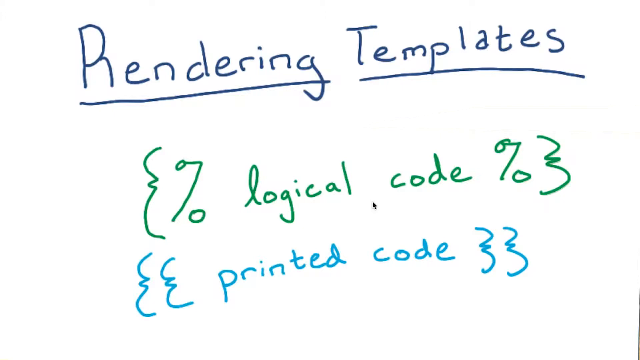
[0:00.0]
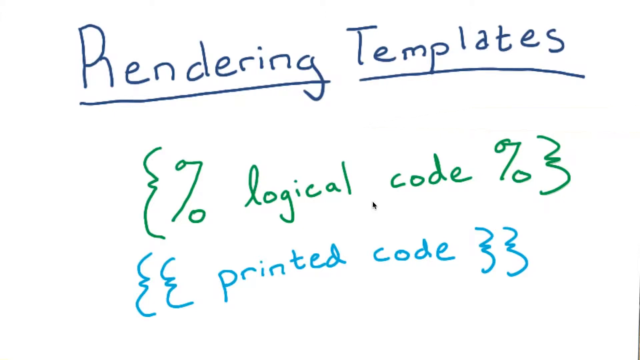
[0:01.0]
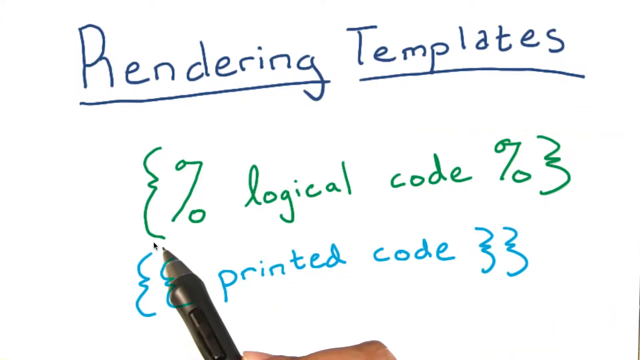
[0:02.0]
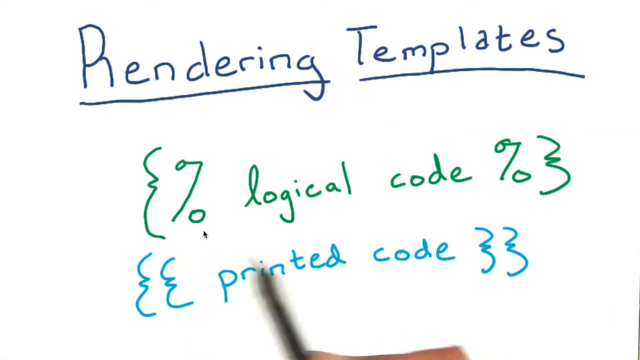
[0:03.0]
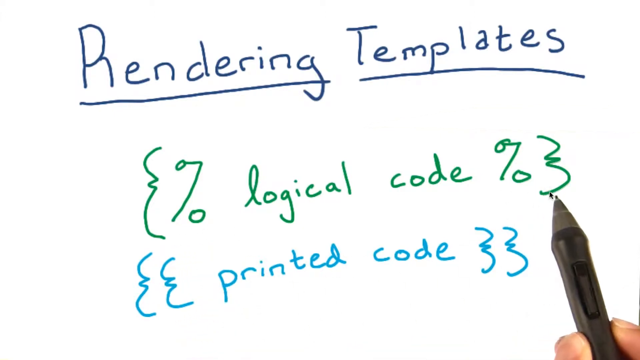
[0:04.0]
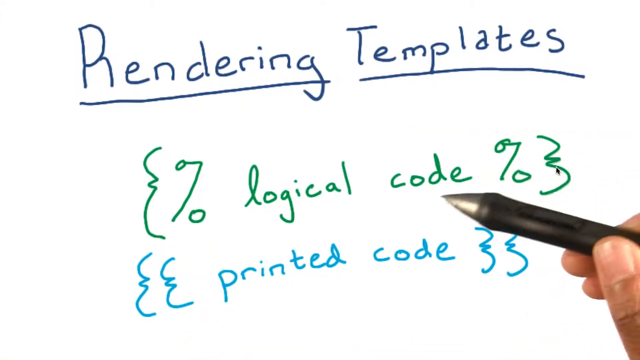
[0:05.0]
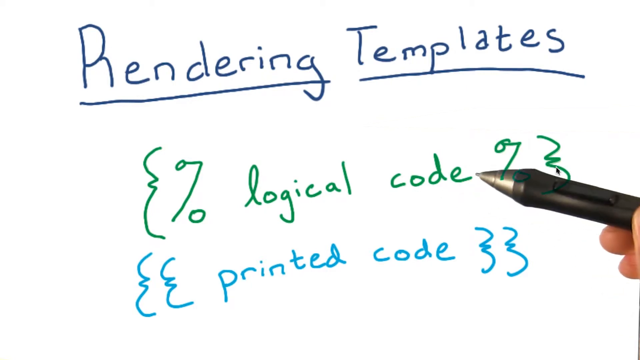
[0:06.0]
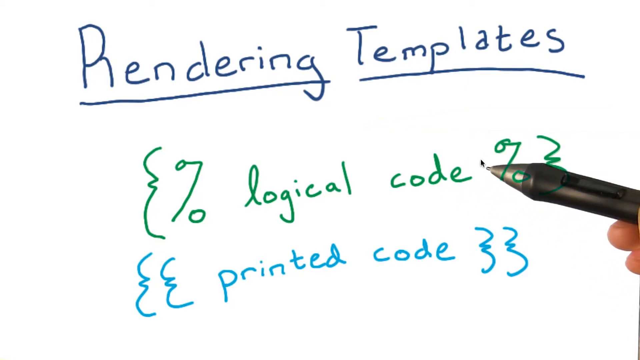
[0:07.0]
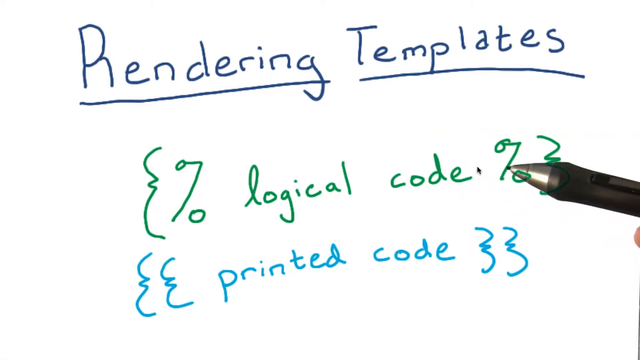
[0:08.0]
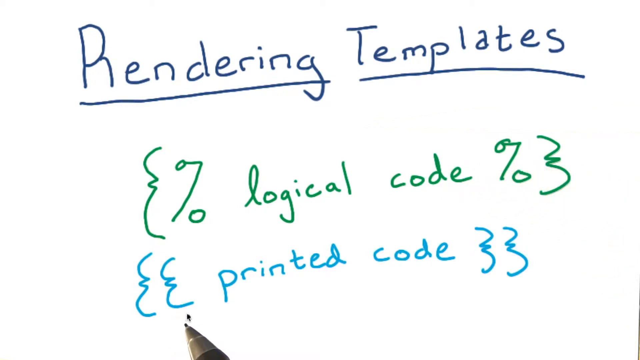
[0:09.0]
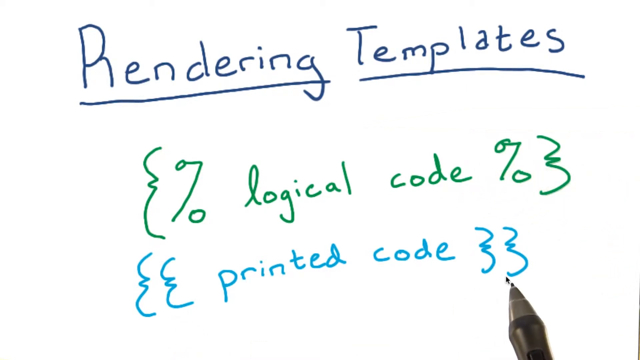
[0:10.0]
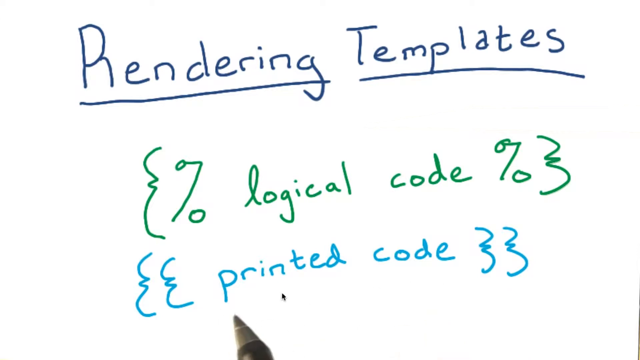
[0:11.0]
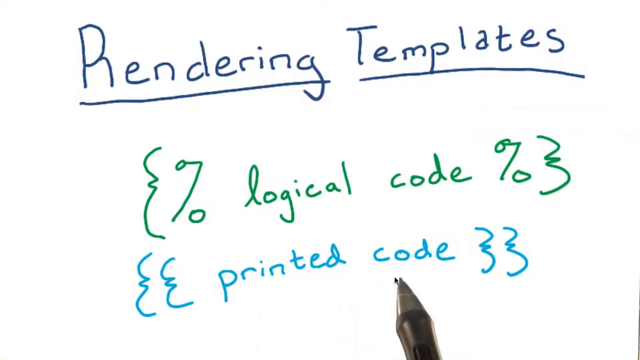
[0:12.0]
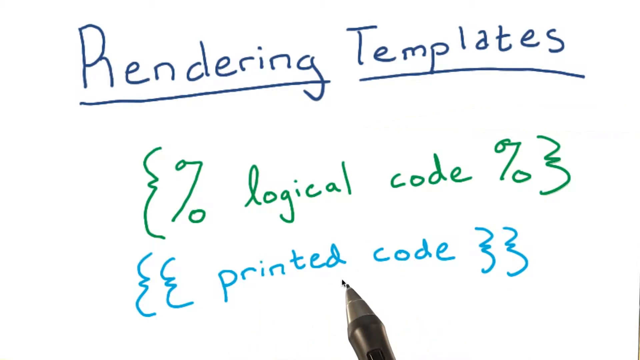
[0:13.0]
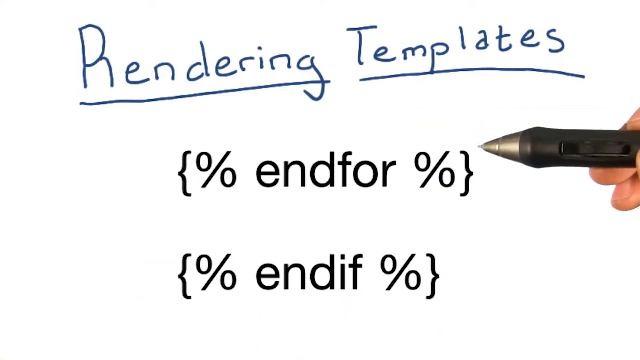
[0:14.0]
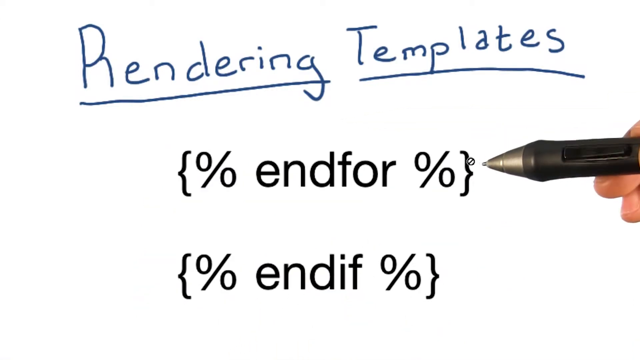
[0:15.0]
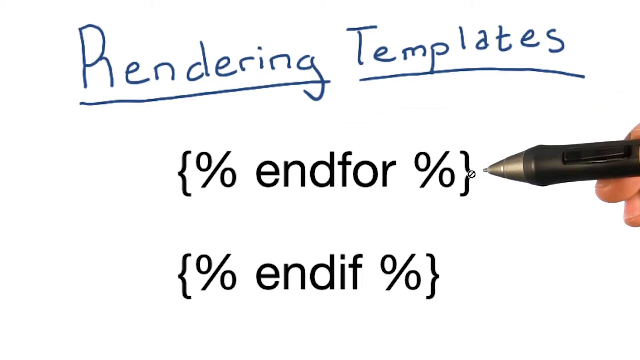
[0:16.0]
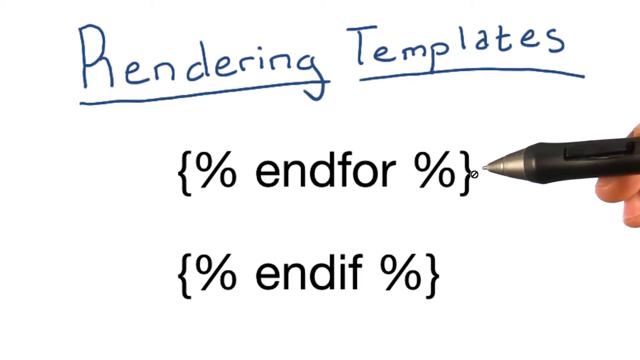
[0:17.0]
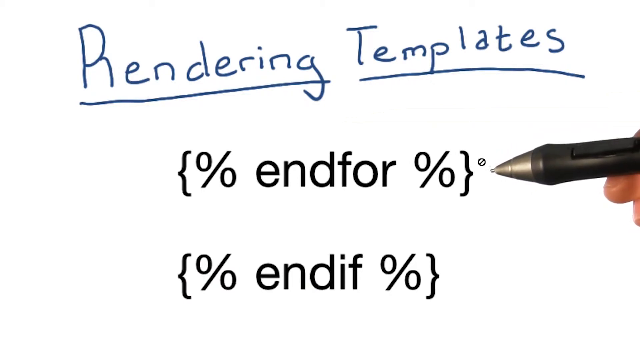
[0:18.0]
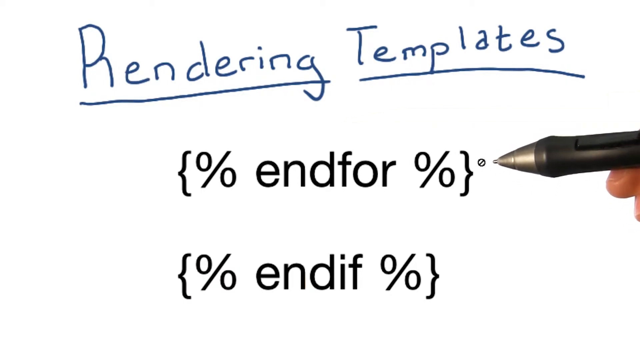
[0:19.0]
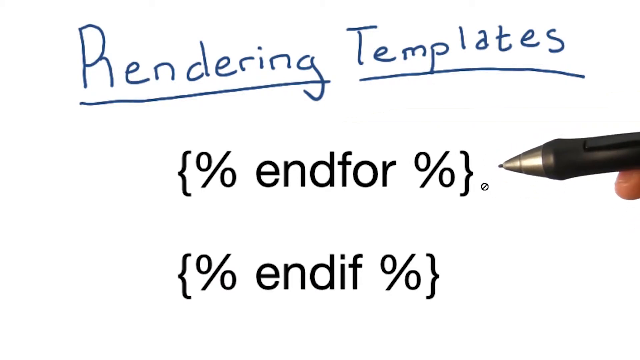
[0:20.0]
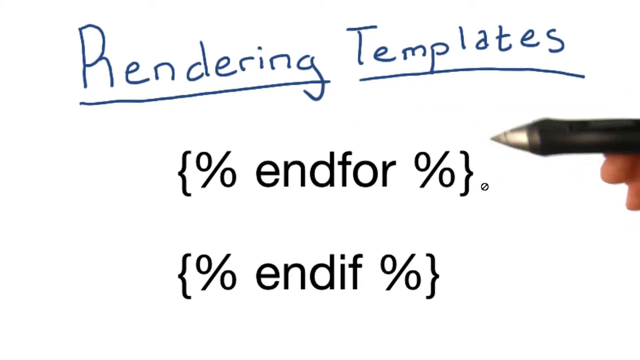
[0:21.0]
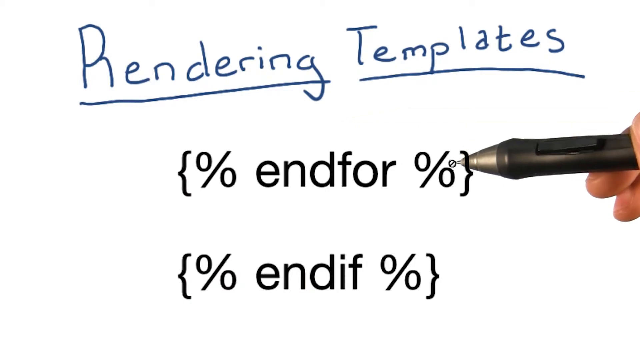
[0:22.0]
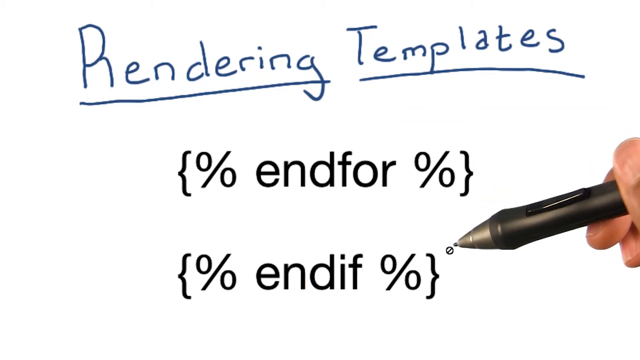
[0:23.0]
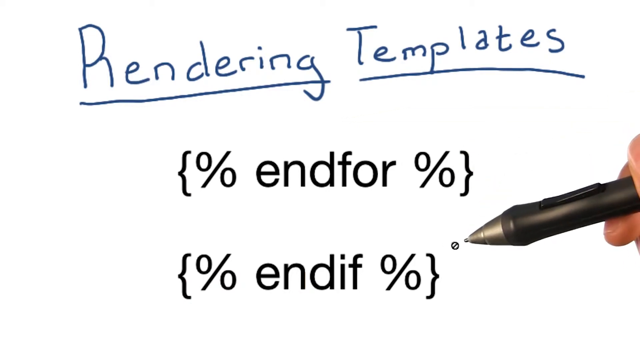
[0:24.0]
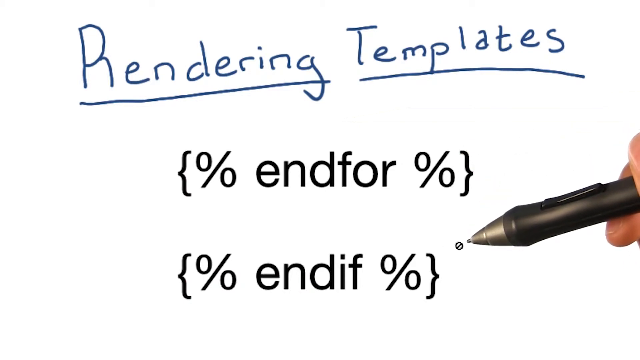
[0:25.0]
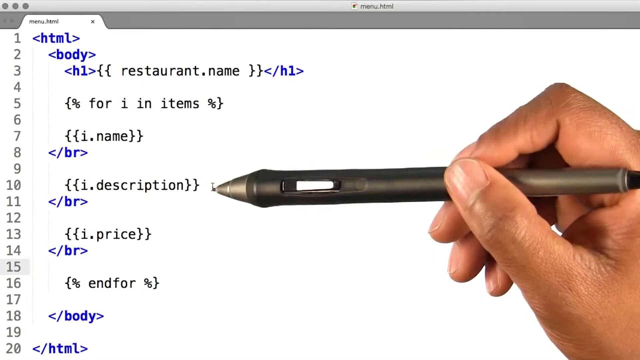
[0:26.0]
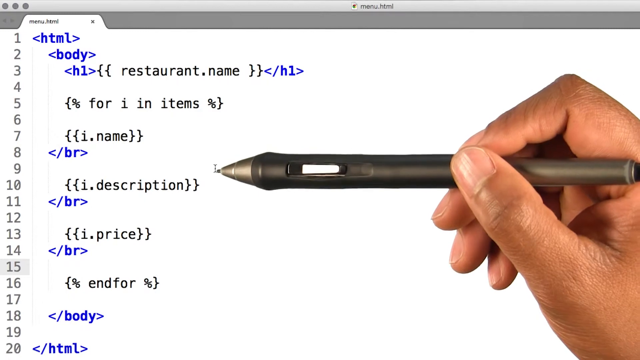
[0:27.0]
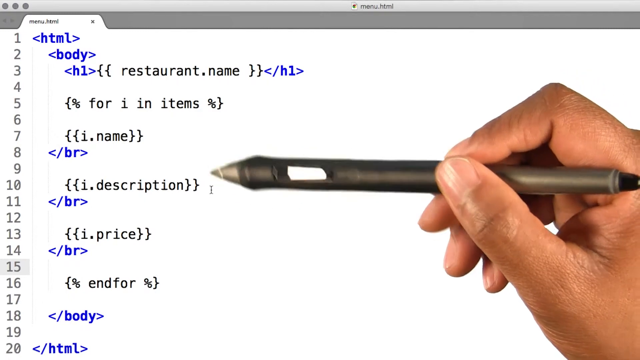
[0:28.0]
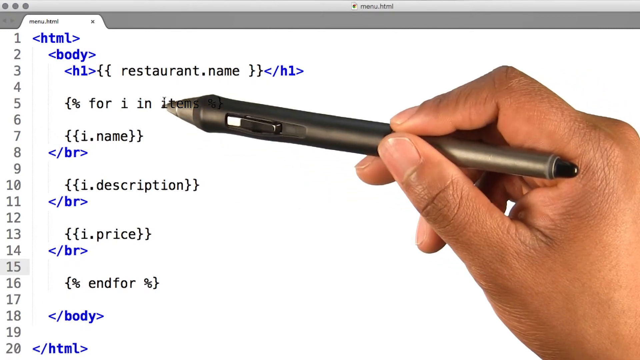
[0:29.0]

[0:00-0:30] A white screen shows instructions written on it, resembling an online or virtual class, or even a blackboard, with a person writing and teaching. It appears to be a coding class, and a pen shows that the person is writing in real time. At the top, in a slightly darker blue, the text reads "Rendering Templates". In green, between keys, "the logical percentage of the code" is highlighted, and below it, between double keys, "the printed code" appears in a lighter blue. The colors and words are clearly separated. Soon after, this handwritten information disappears and reappears in a different format, looking typed rather than handwritten, and then a description of the code appears in a notepad.